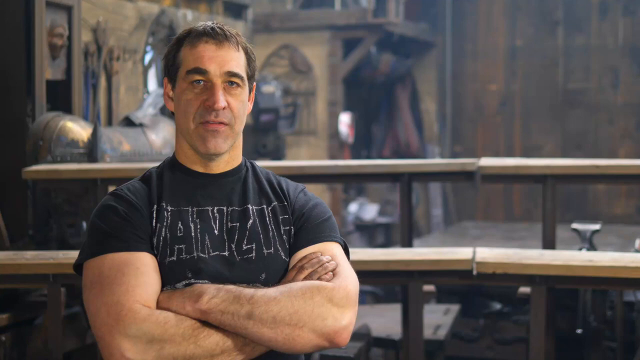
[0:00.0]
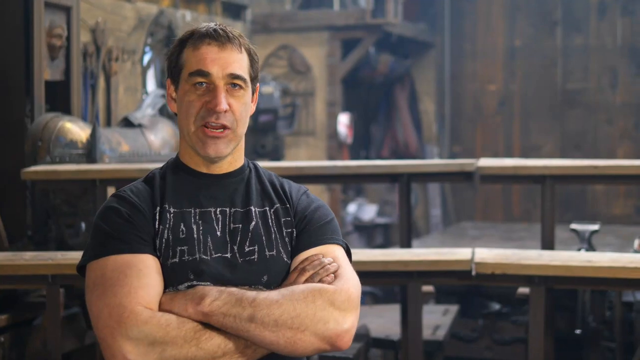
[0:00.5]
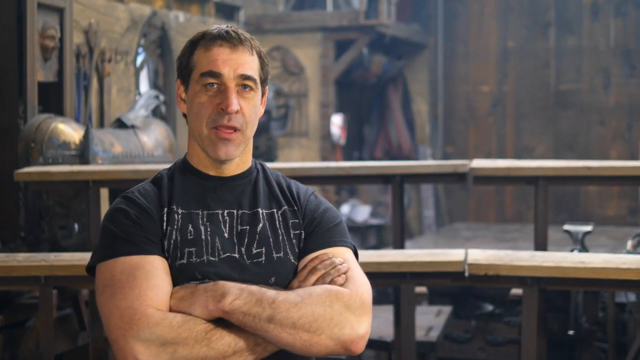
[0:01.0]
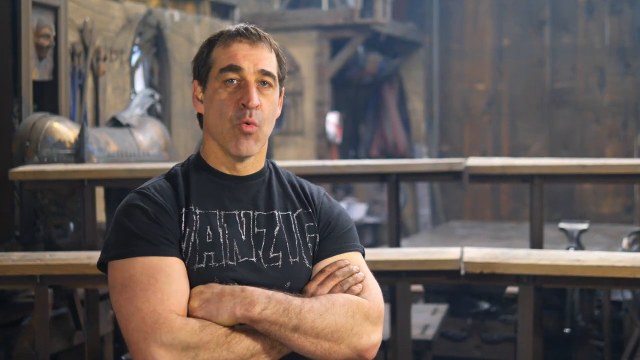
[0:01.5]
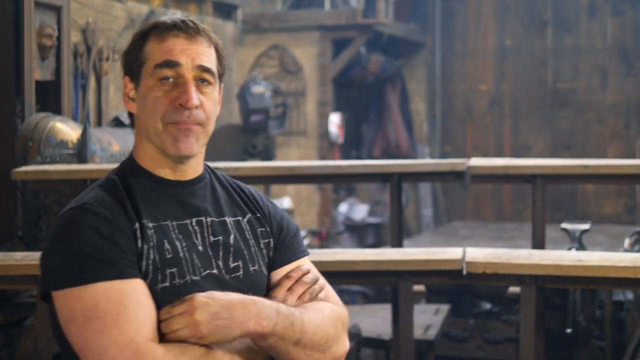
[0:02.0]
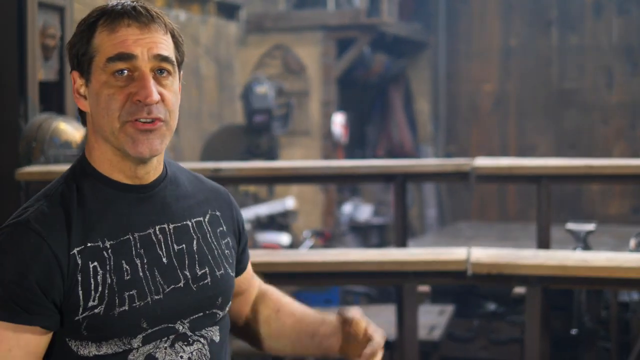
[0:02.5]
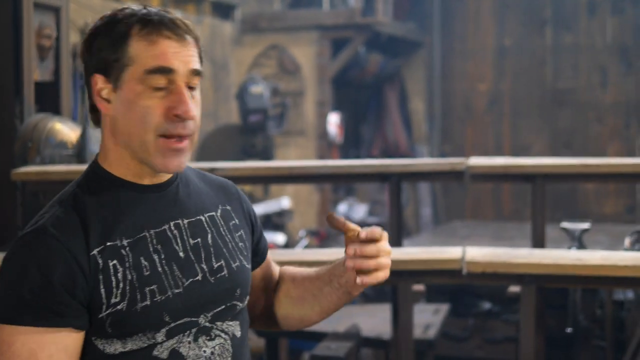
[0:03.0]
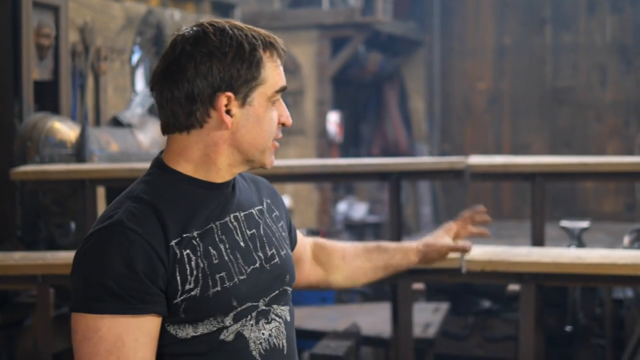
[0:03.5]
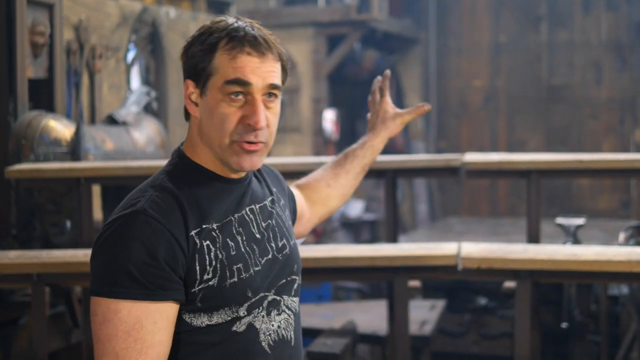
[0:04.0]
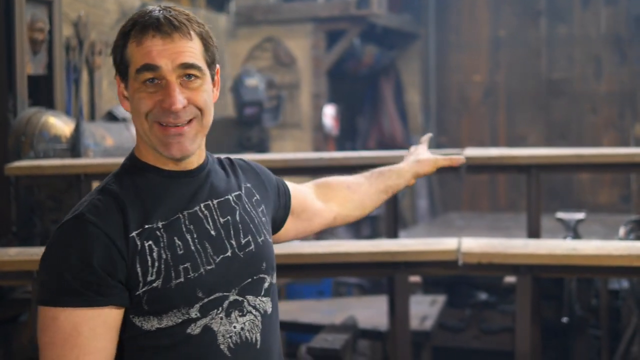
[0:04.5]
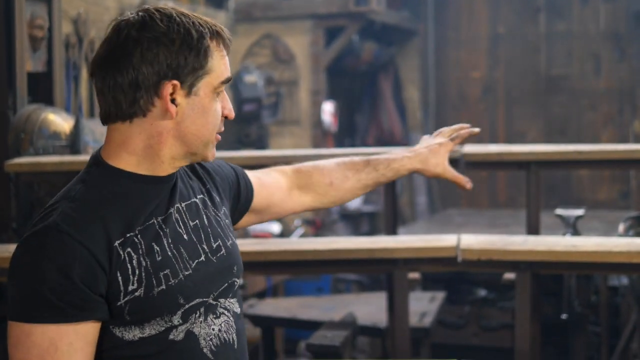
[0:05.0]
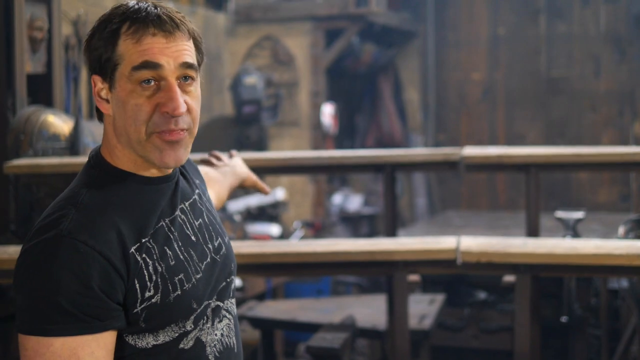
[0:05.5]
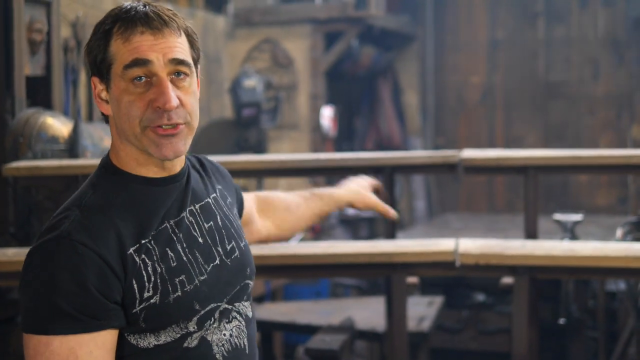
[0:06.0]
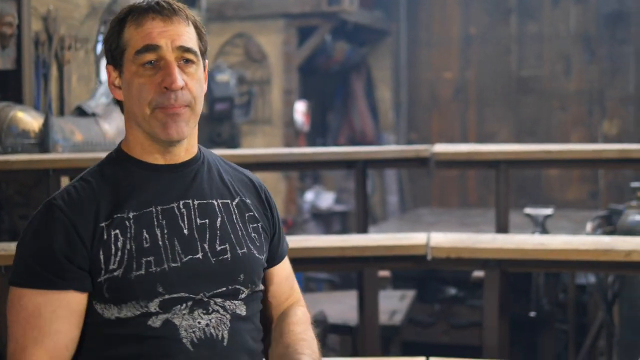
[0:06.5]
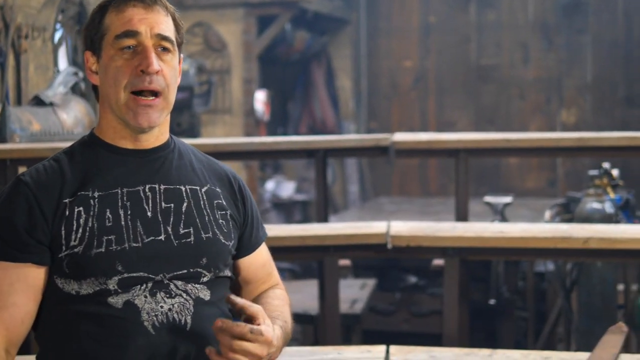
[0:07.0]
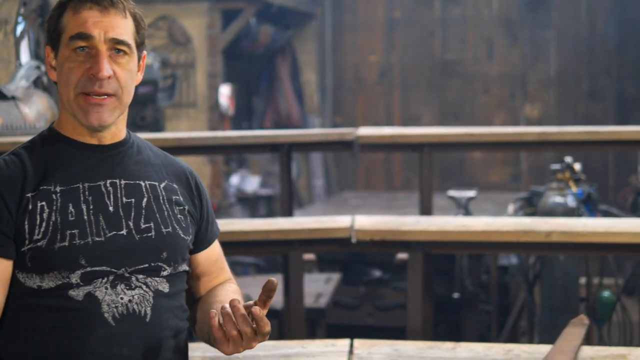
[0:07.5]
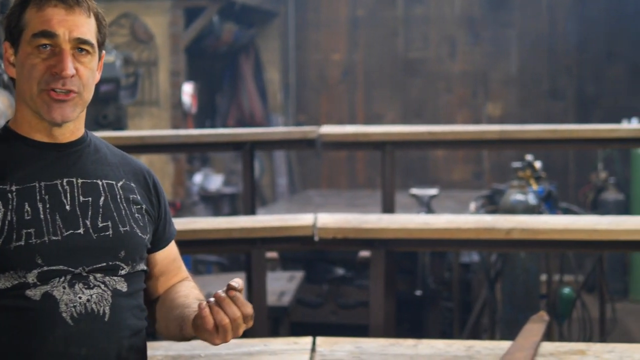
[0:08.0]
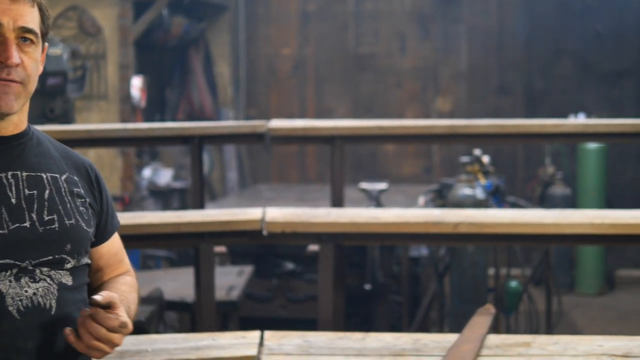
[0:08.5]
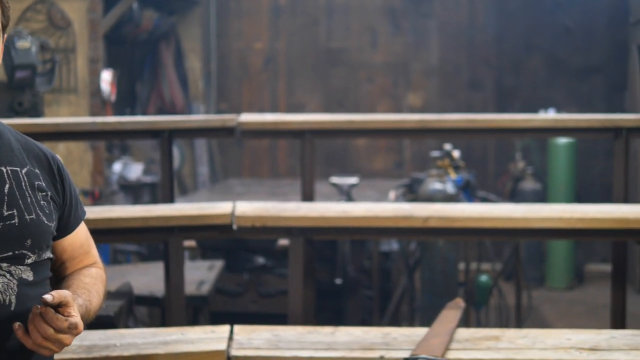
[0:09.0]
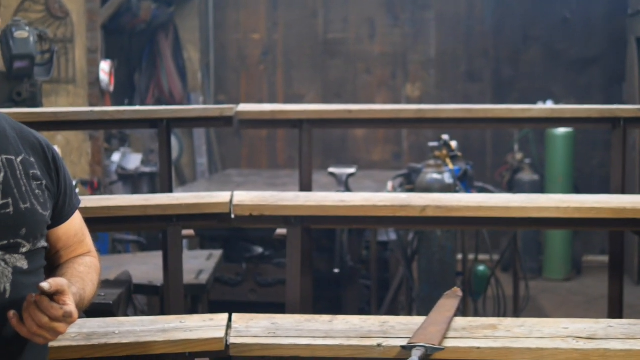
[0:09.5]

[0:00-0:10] A single man is talking, wearing a Danzig shirt. He has short black hair and looks to be in very good shape. There is a sword on a table, and the background has kind of a medieval theme. There is a changing room in the back and some armor on the left side. Structures that look like bleachers or seats are behind him, and the area possibly resembles the stage of a theater production. Objects that look like tanks are in the back.